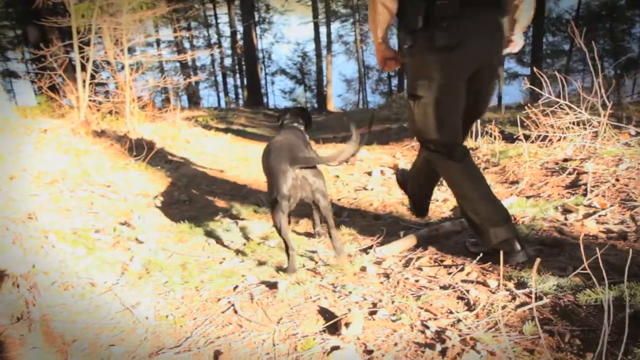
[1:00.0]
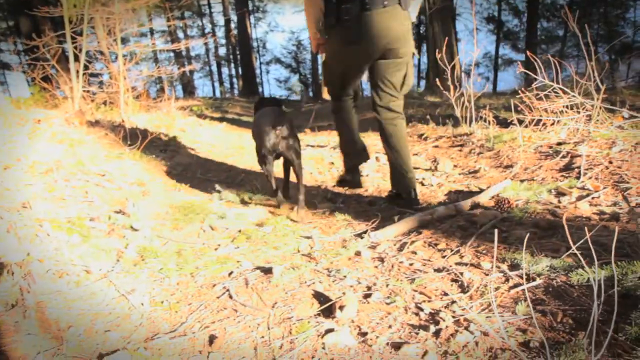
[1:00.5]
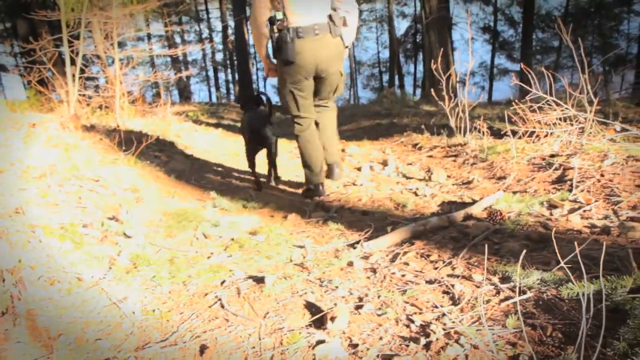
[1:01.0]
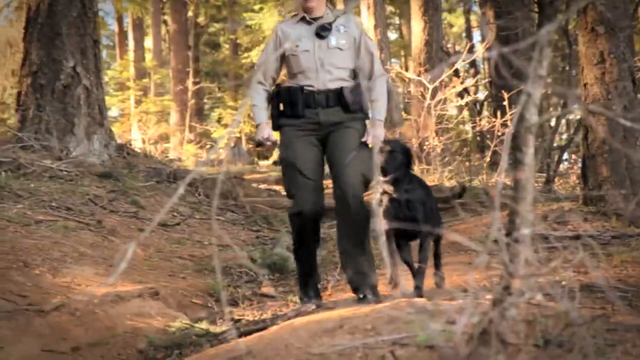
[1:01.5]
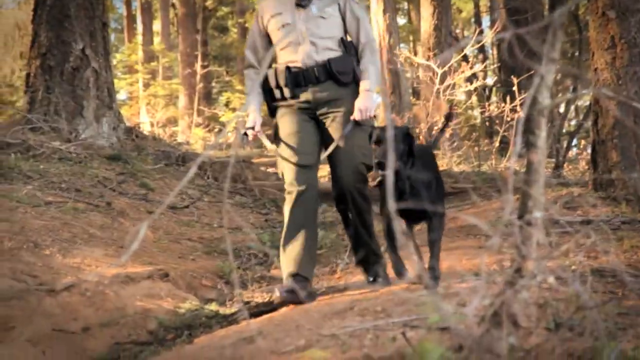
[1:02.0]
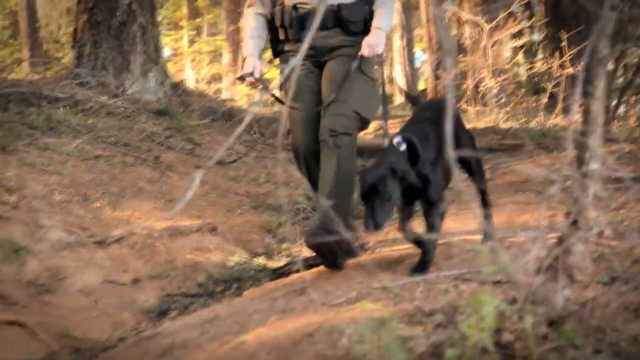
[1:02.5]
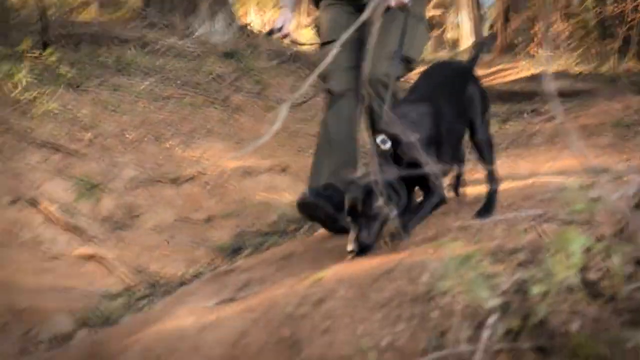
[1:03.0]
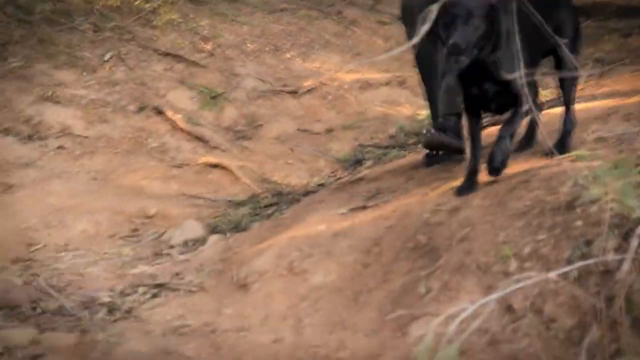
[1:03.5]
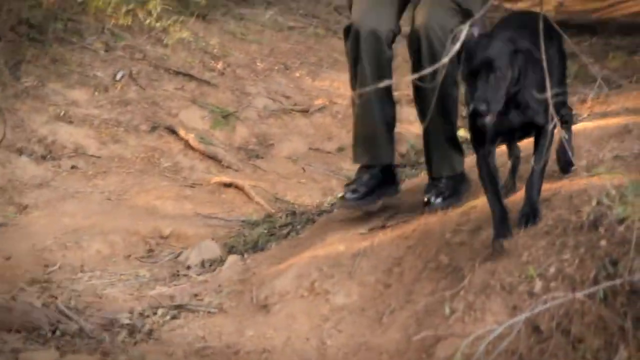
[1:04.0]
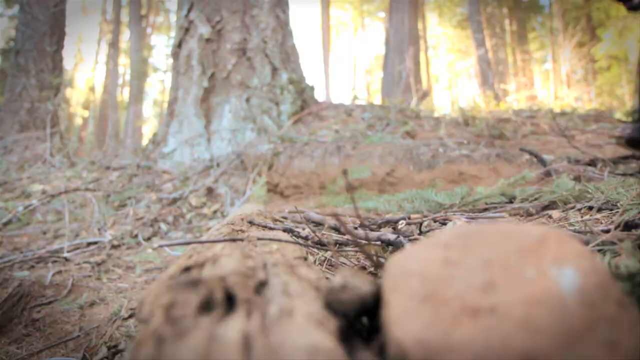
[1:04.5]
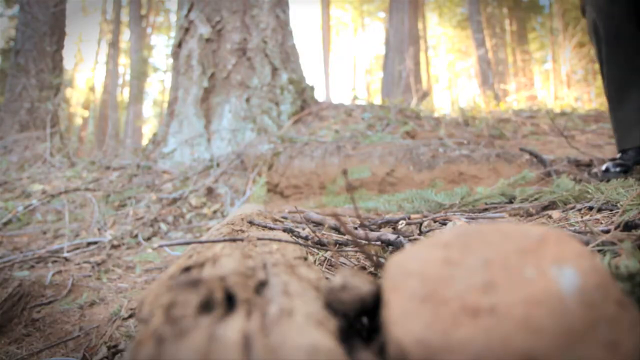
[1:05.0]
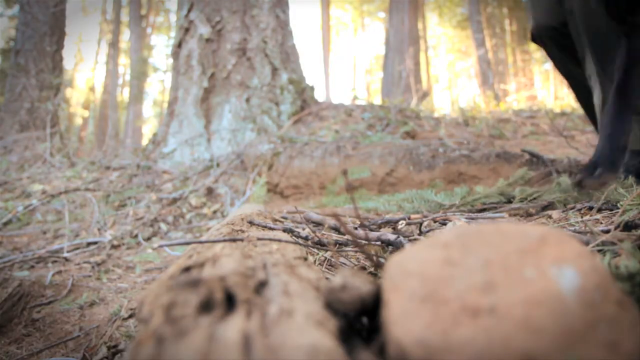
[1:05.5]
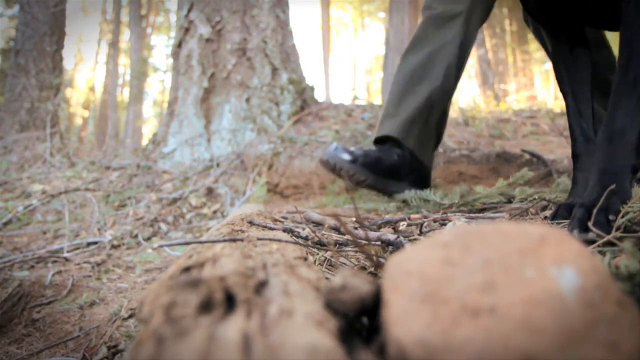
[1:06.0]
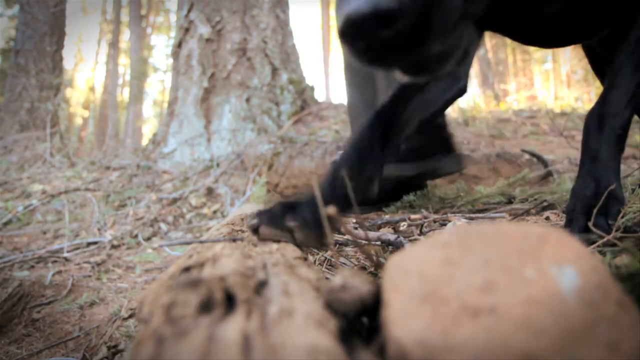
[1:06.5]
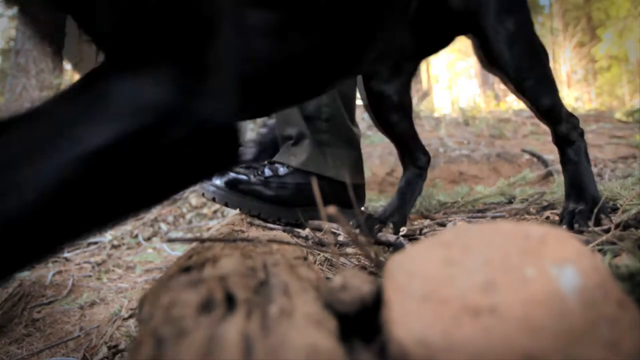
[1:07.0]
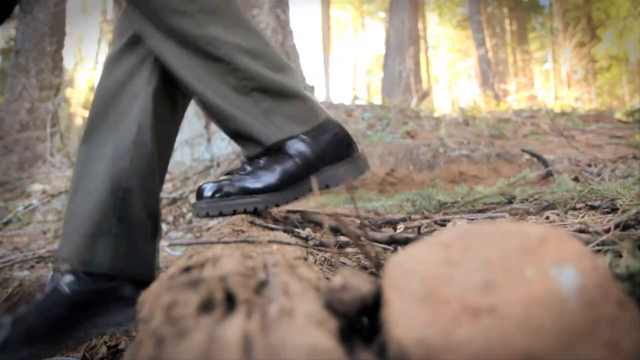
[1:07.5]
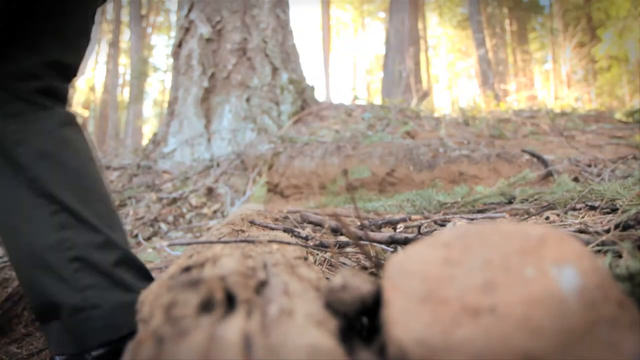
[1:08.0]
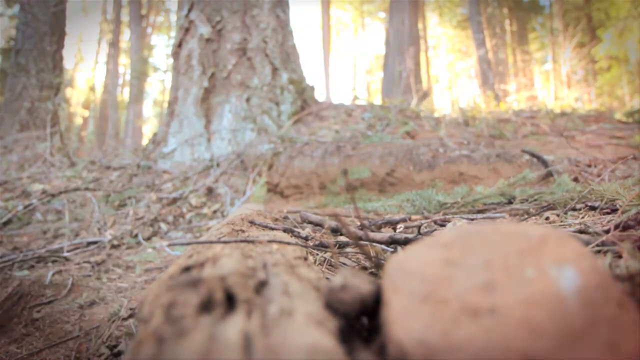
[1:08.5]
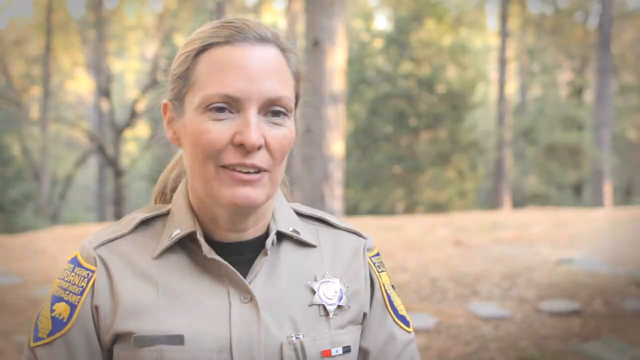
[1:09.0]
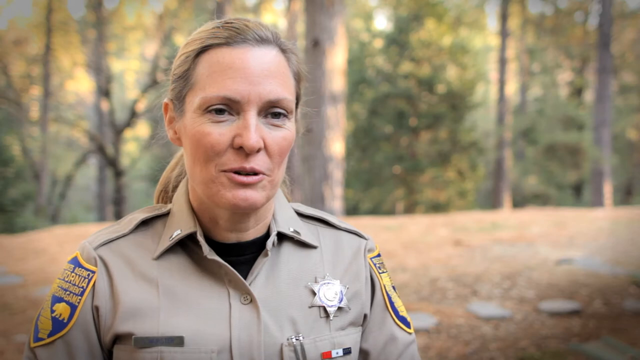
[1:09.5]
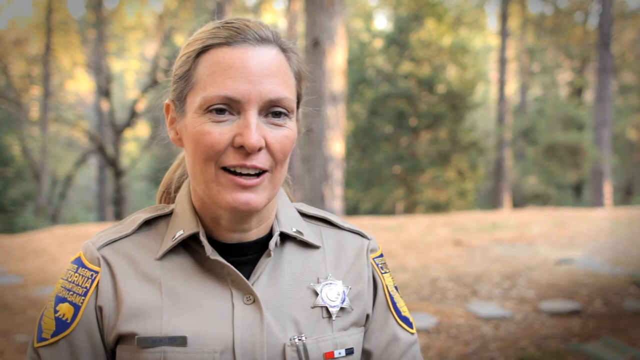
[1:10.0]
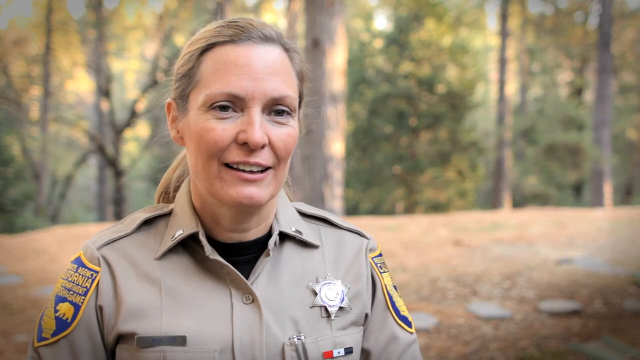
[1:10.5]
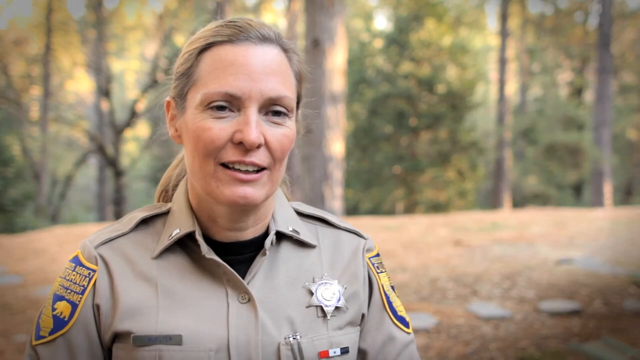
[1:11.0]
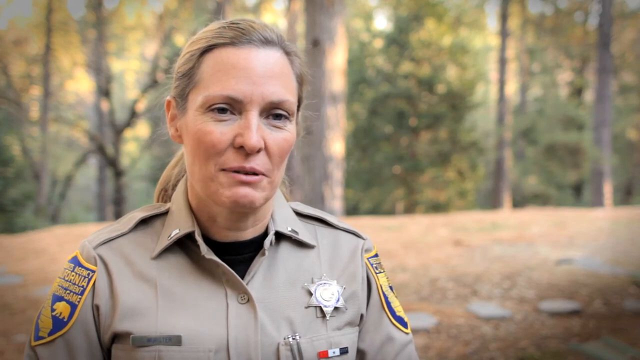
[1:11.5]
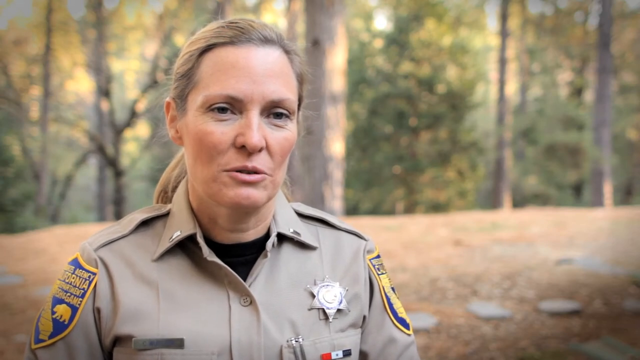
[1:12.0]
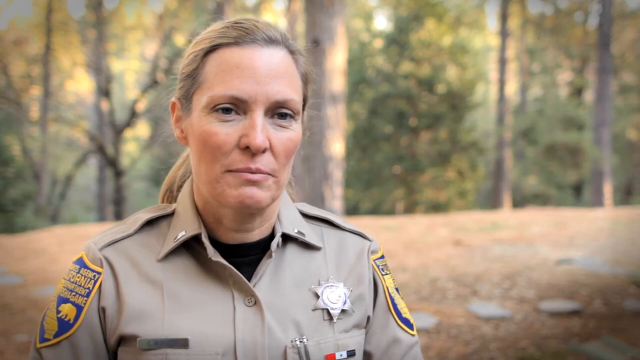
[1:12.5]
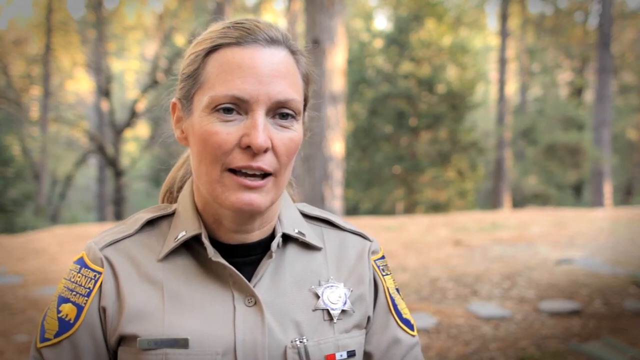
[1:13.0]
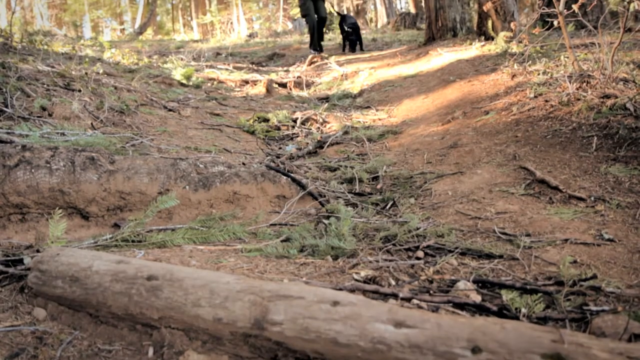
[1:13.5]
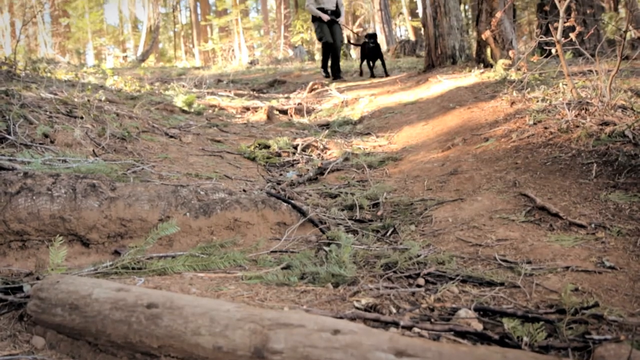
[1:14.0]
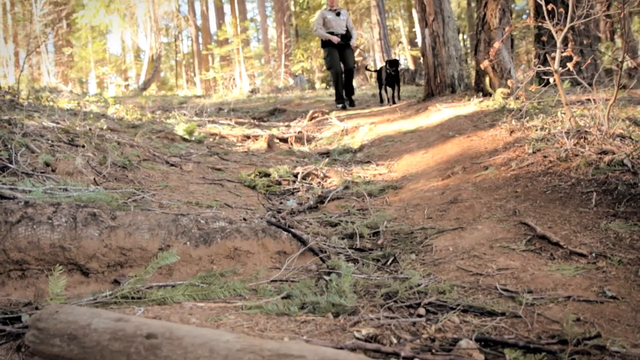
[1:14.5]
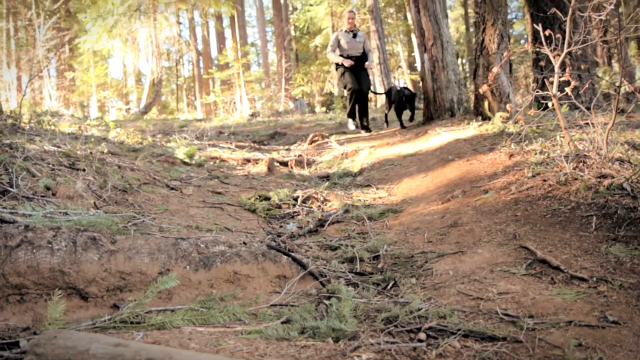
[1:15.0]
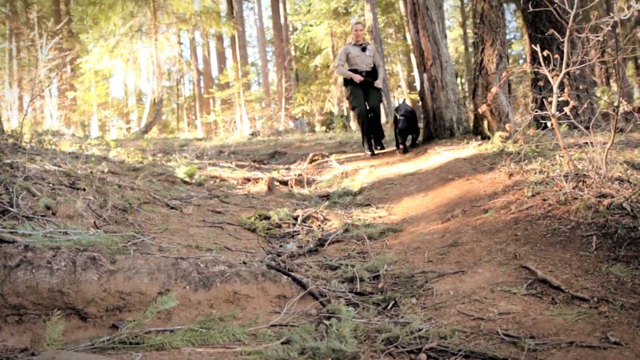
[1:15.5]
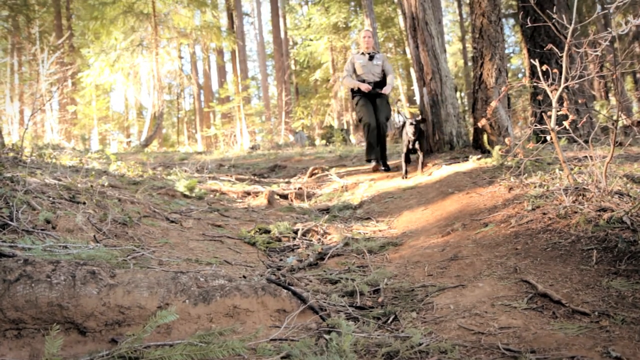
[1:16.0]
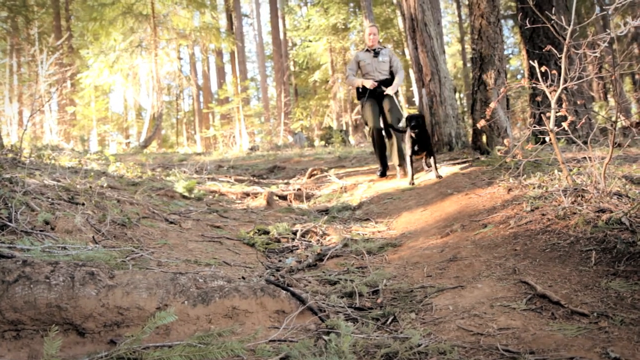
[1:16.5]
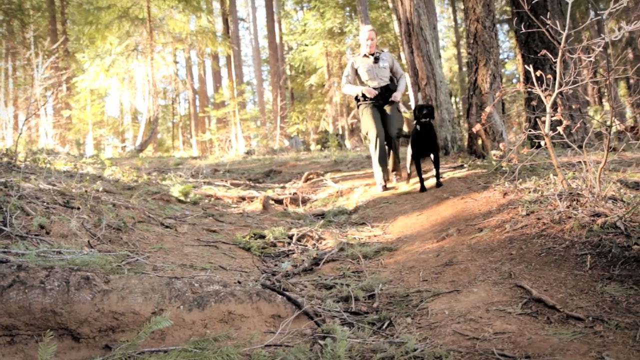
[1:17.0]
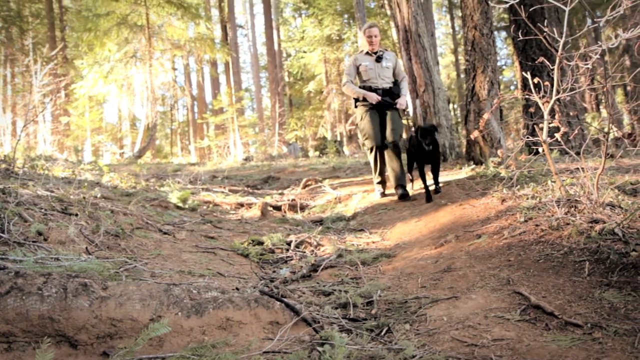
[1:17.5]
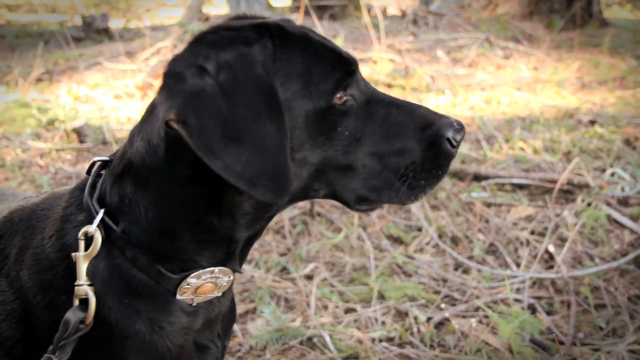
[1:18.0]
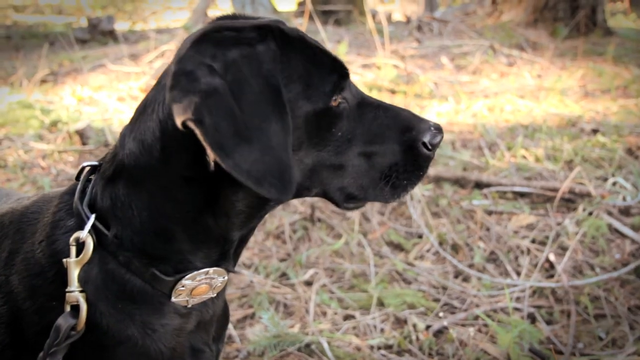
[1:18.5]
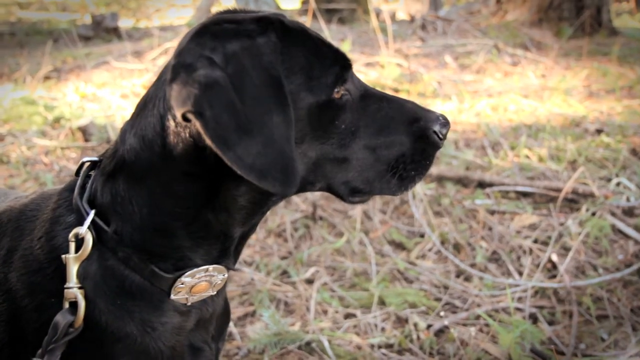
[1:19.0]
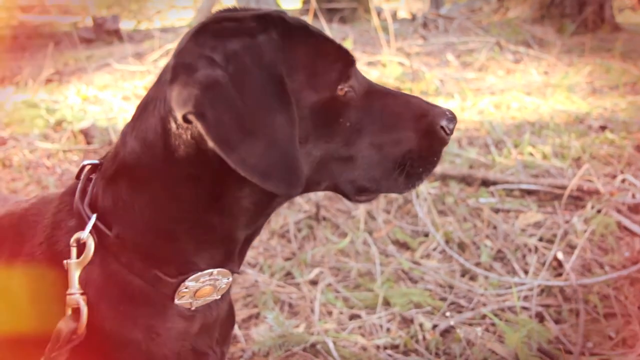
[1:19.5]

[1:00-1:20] Christy walks down a mountainside handling her dog on a small black leash, gripping the leash in a fist in her left hand as she goes down the hill. She wears long green pants that match the top of her uniform, and black boots. The dog sniffs the ground in front of it and seems to be leading Christy to something important. Christy is again in front of the large wooded area talking to the camera. The path she walks down appears etched out of the forest by people walking it previously. From a different angle, the dog's collar is seen more closely as they seem to spot something in the distance. A silver badge is on the front of the dog's collar, the same badge Christy wears on the front of her uniform.